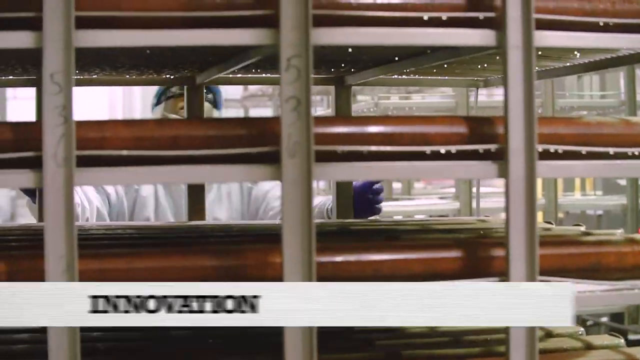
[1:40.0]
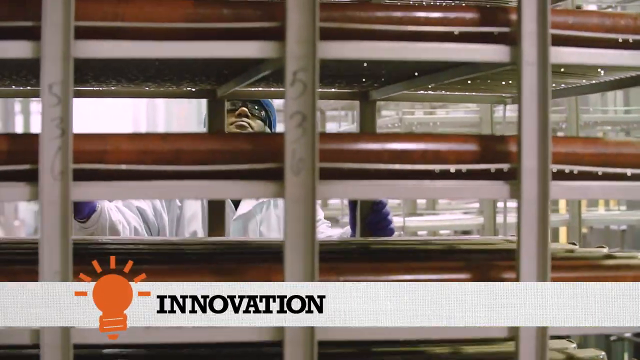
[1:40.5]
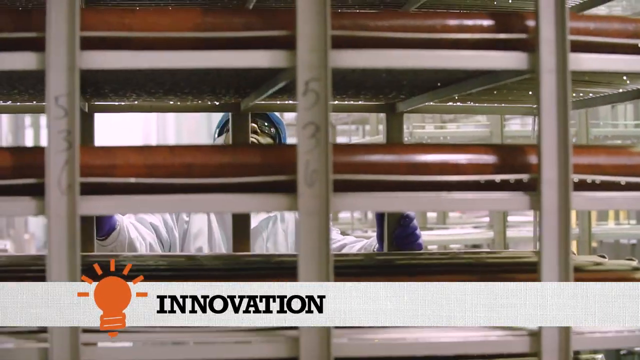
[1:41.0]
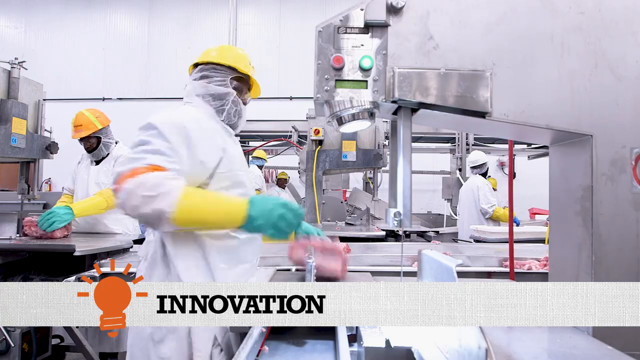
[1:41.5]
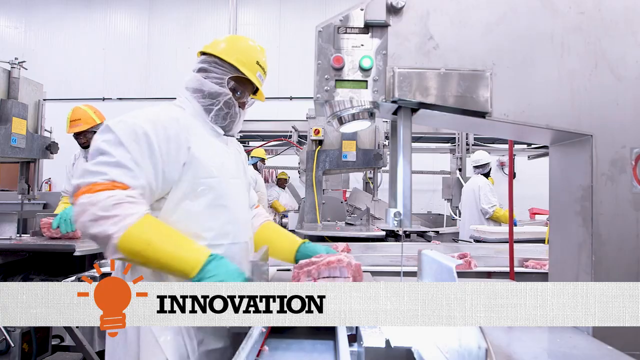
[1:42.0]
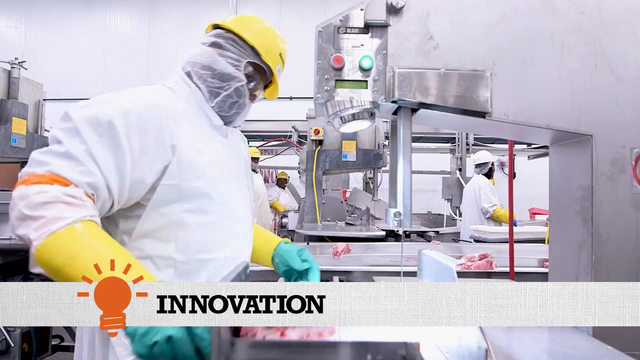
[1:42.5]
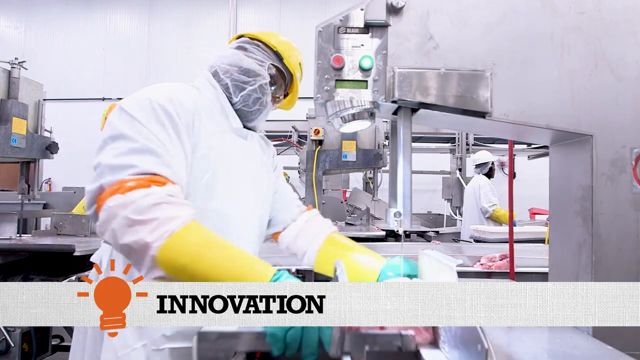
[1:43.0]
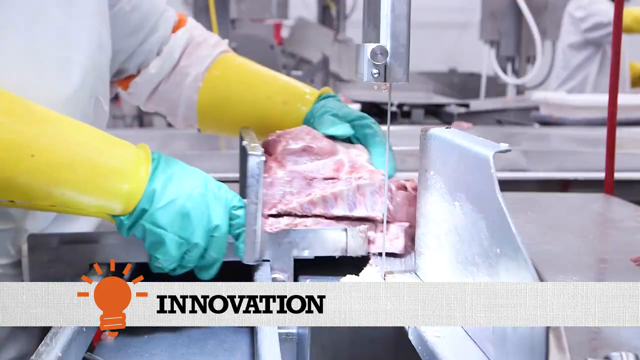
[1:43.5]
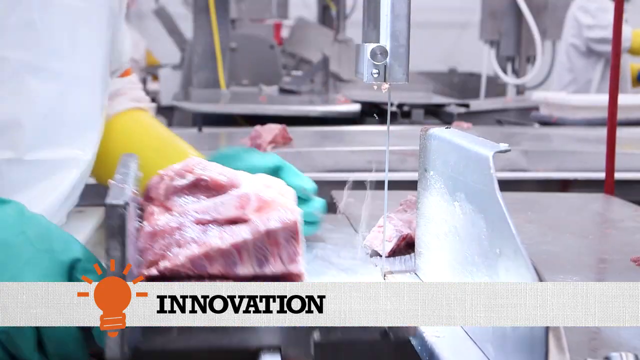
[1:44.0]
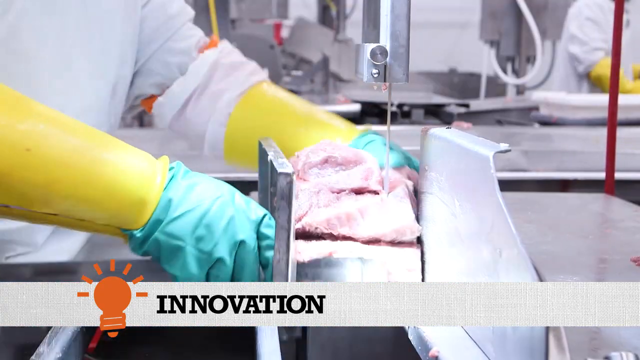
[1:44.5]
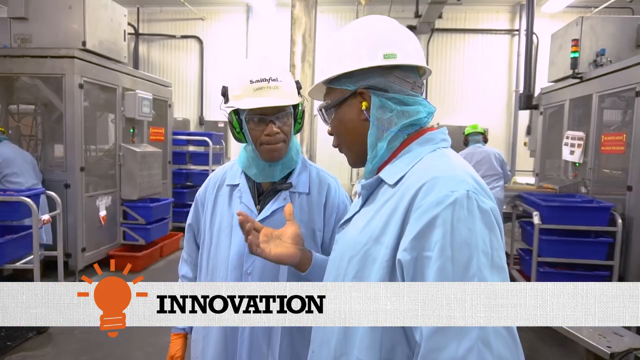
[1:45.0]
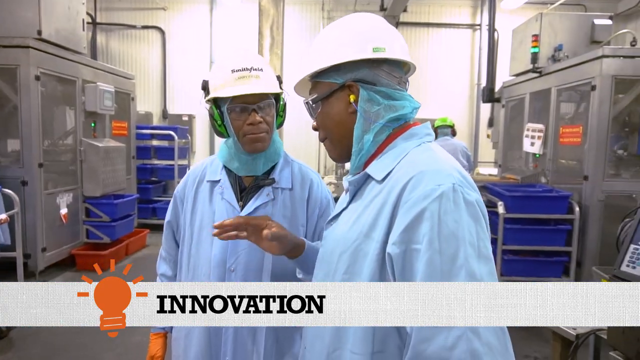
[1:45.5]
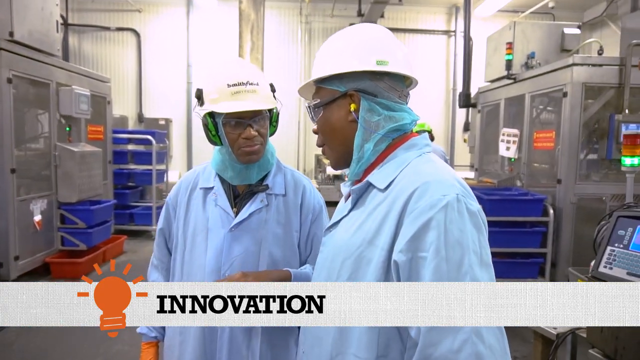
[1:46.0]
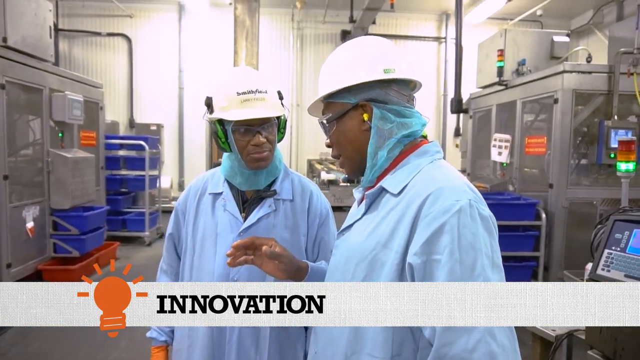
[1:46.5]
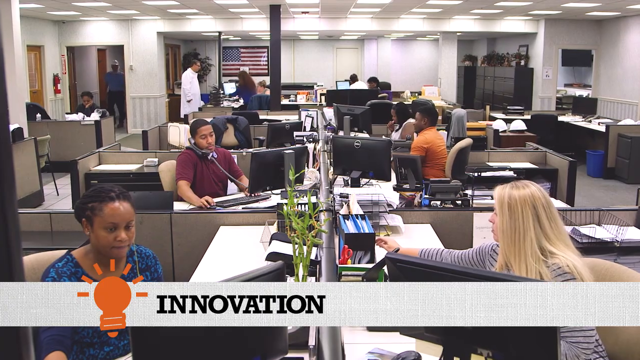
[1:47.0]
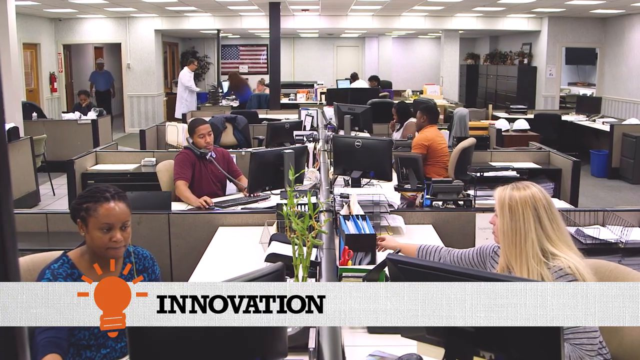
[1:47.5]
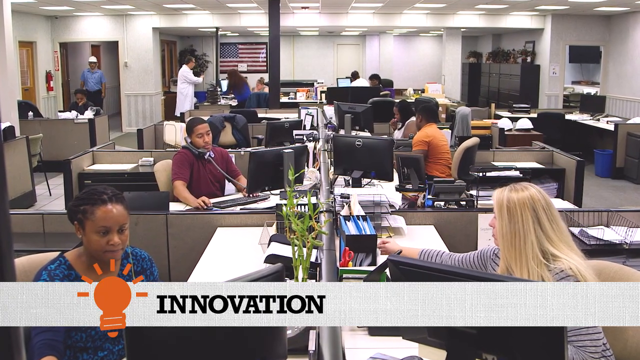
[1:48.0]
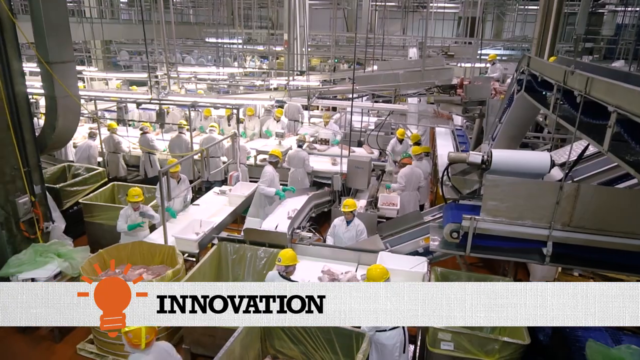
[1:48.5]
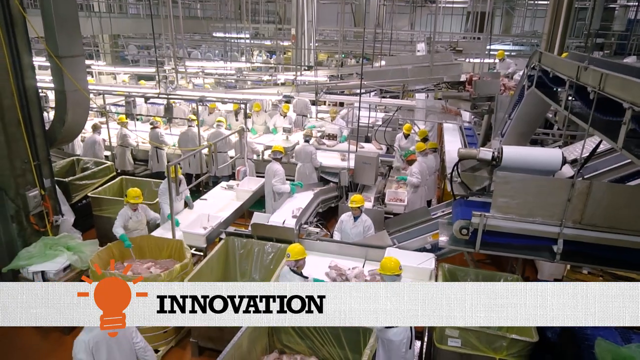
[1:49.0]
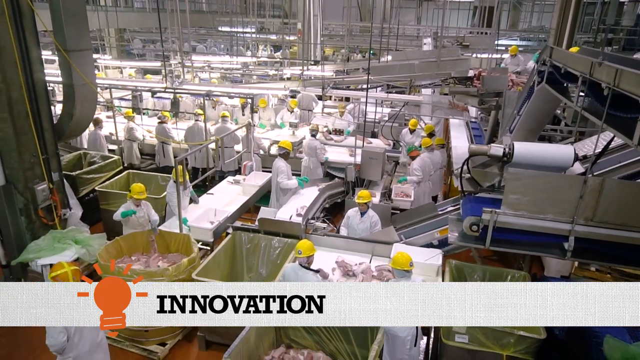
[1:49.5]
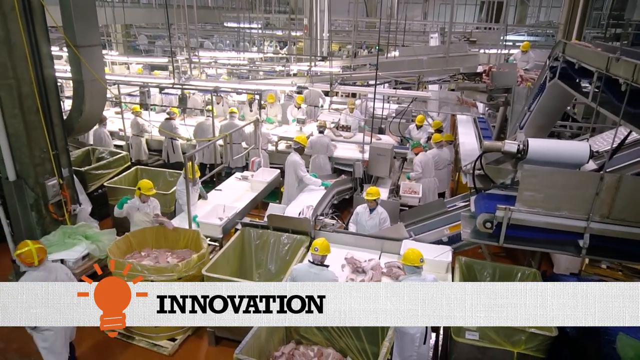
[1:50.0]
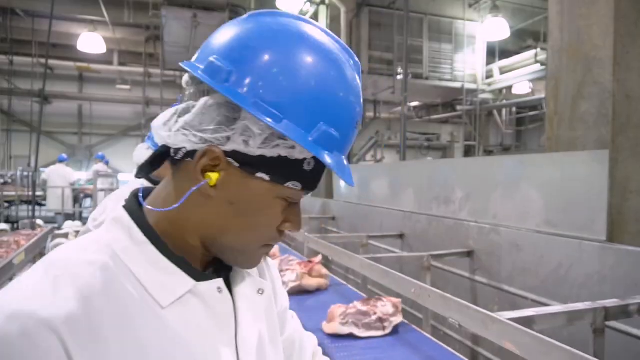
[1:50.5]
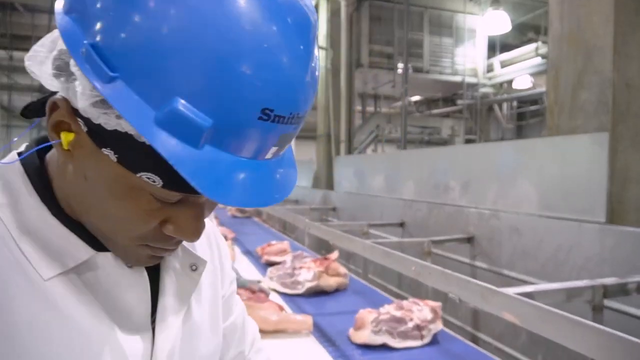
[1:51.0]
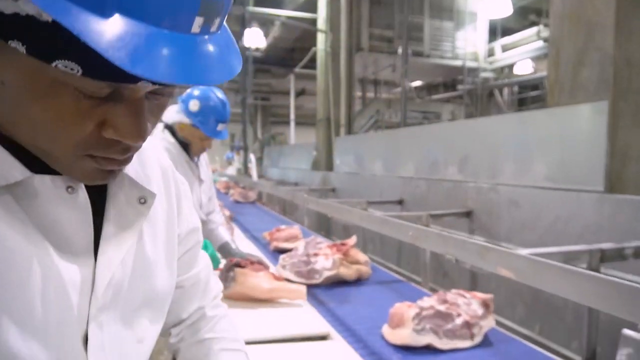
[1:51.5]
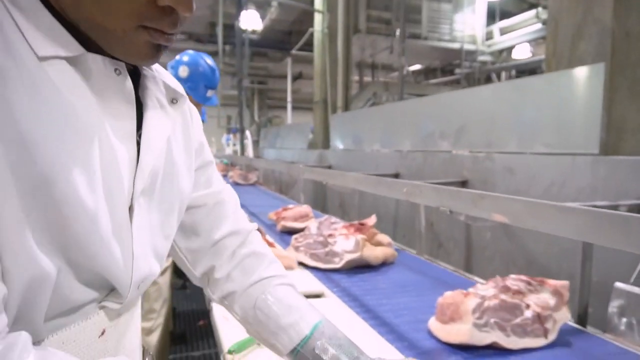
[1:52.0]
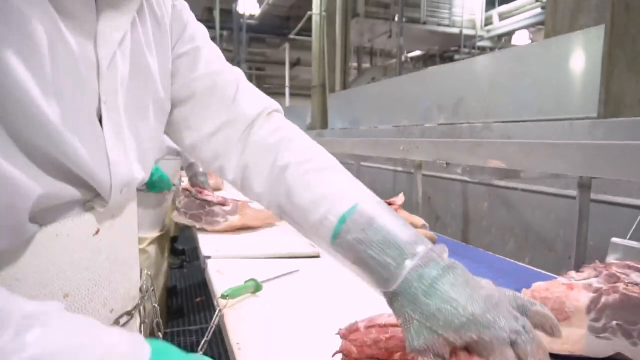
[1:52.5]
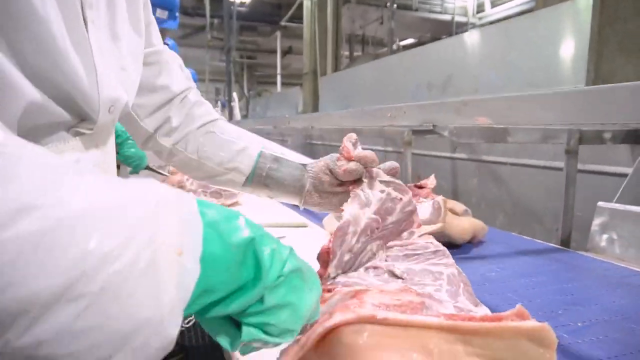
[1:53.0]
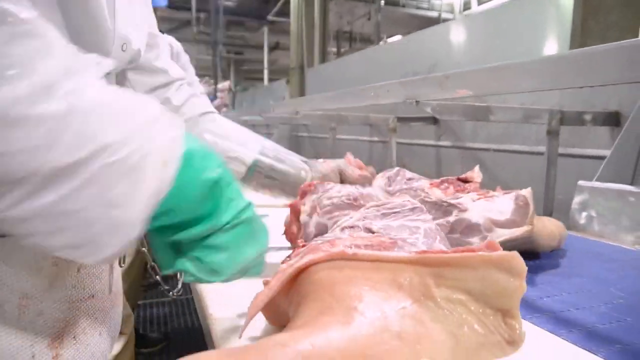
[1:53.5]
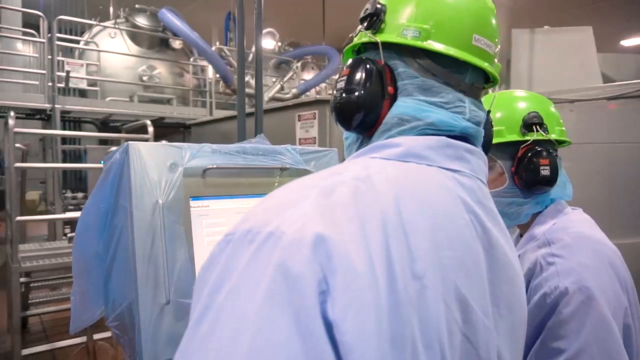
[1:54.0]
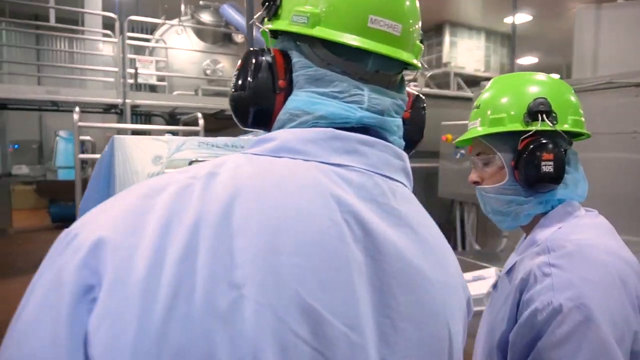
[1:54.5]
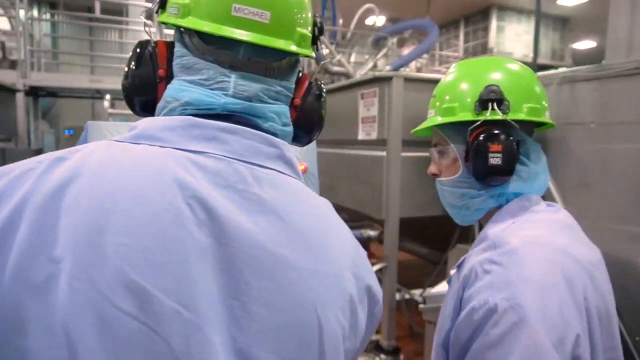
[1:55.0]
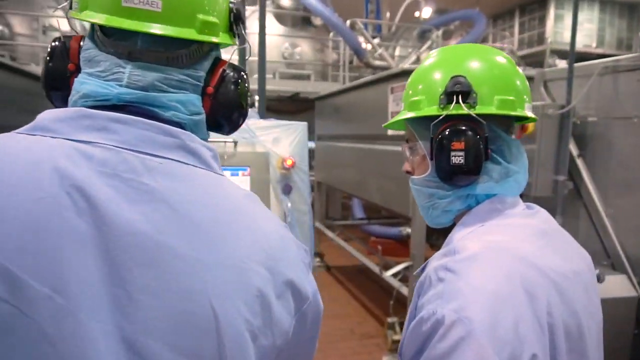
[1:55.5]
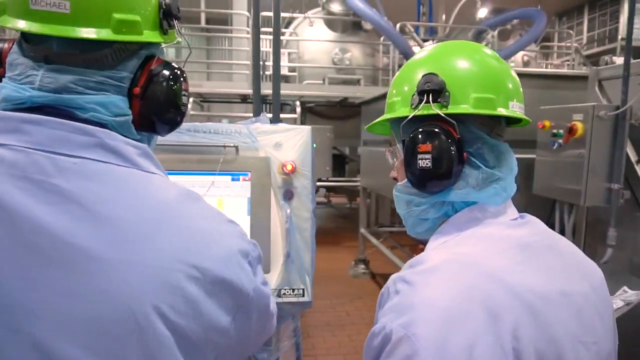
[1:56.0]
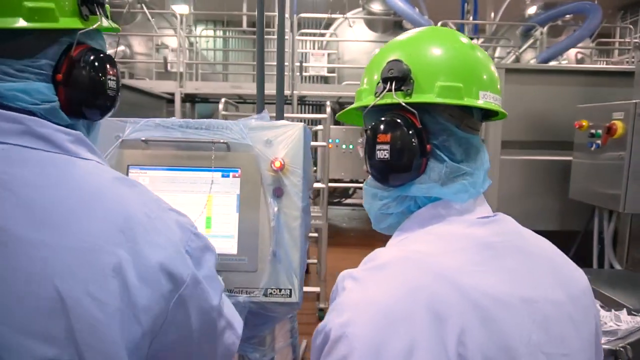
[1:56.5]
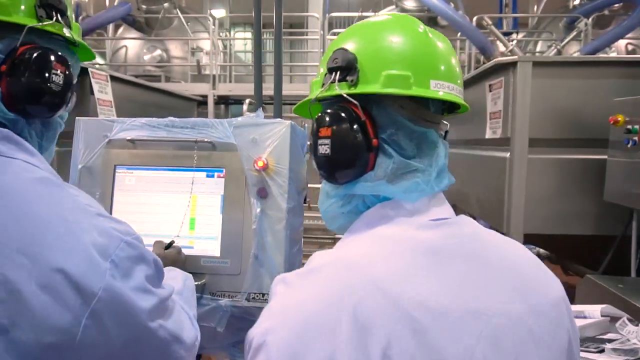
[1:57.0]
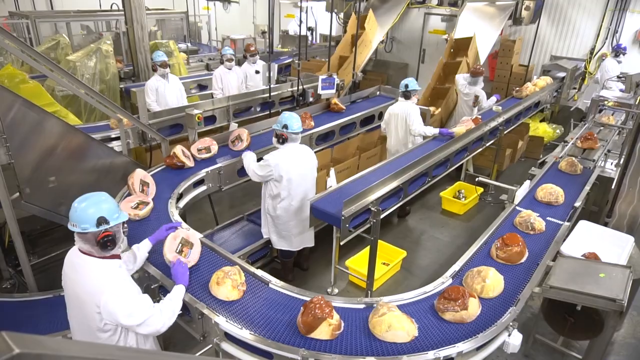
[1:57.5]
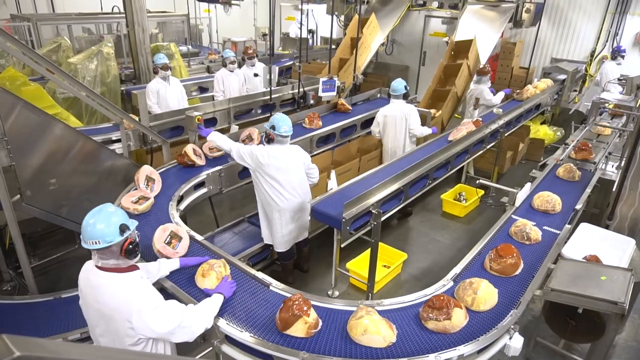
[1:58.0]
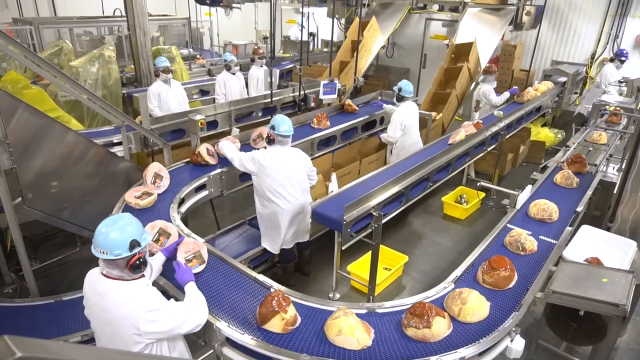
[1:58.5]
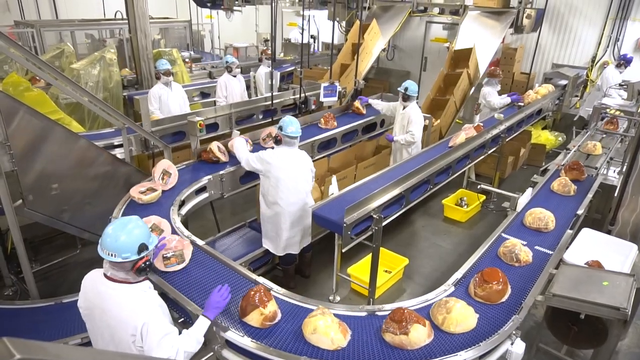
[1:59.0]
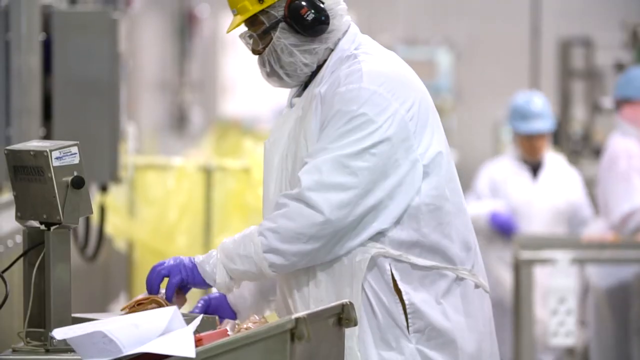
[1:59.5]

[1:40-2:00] "Innovation" comes up at the bottom, coupled with video clips of people in the warehouse speaking to each other, cutting up meat and working near the conveyor belt, wearing their hard hats. A shot inside the office shows people without cloaks and hard hats, in normal office wear, sat at desks with computers, with people speaking in the background. Back in the warehouse, multiple people all wear hard hats, the conveyor belts move with meat on them, and people are stood around cutting the meat up. People also look at machinery, check packaging and do various other tasks. In the warehouse, every member of staff has a hard hat on.